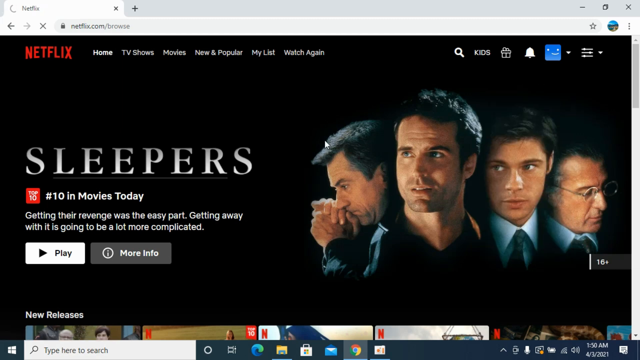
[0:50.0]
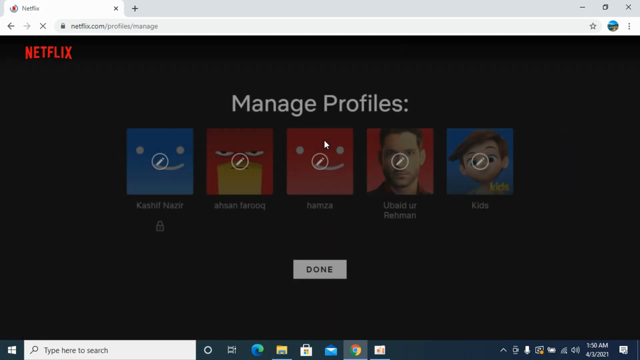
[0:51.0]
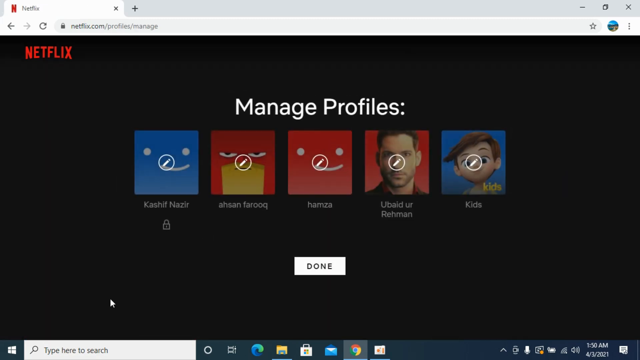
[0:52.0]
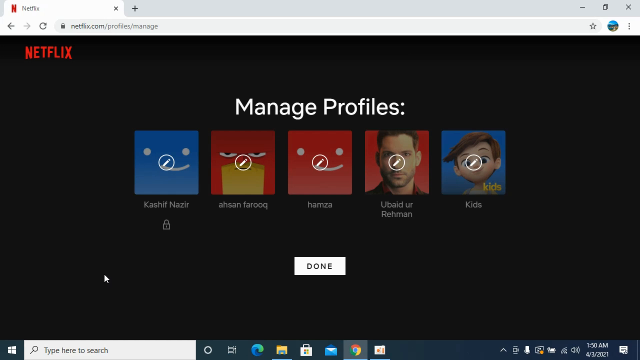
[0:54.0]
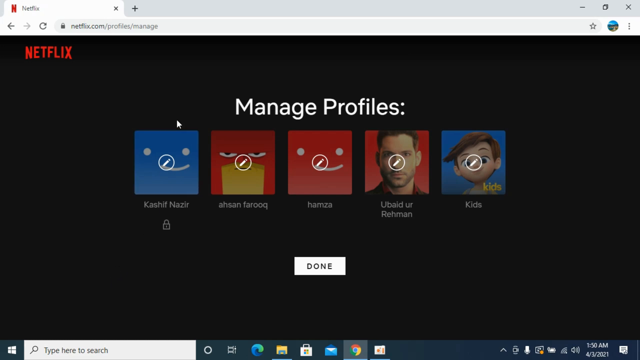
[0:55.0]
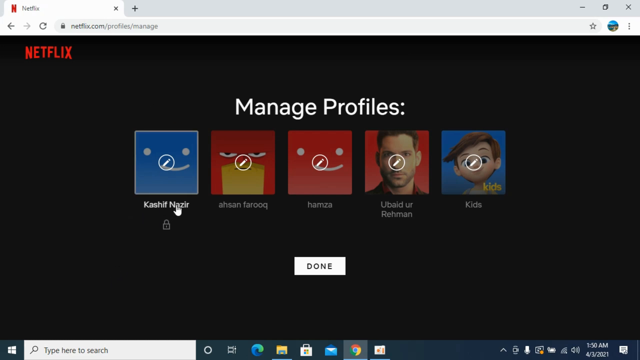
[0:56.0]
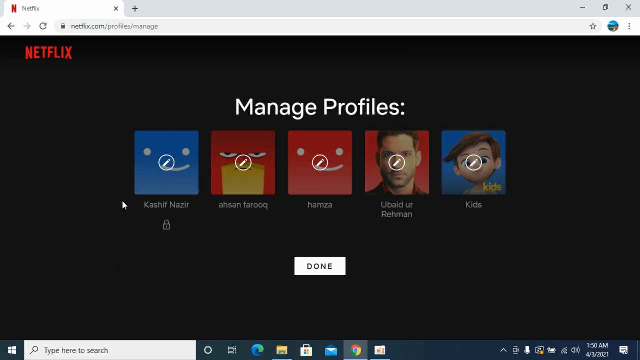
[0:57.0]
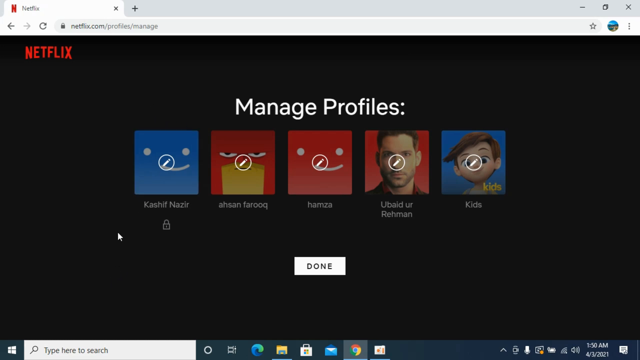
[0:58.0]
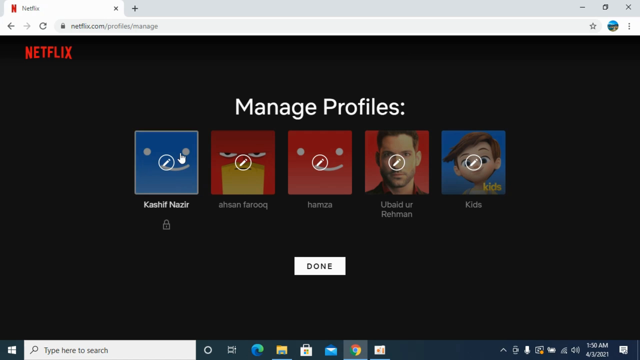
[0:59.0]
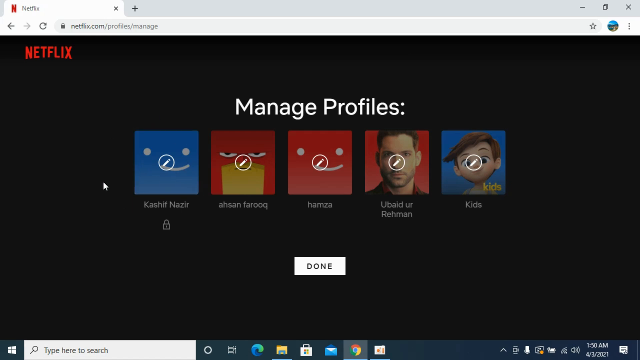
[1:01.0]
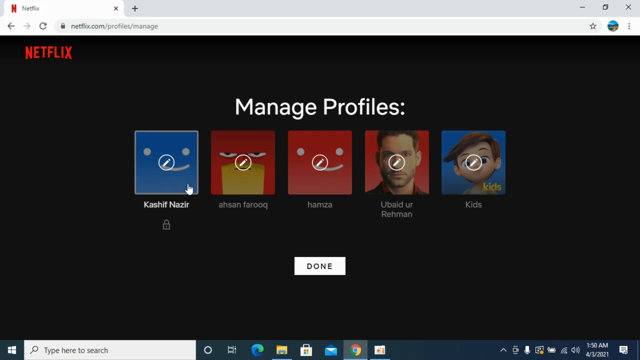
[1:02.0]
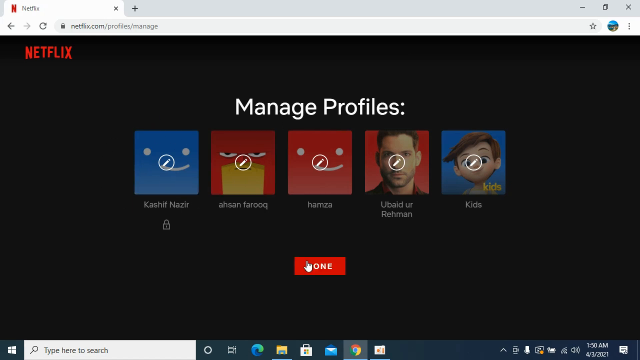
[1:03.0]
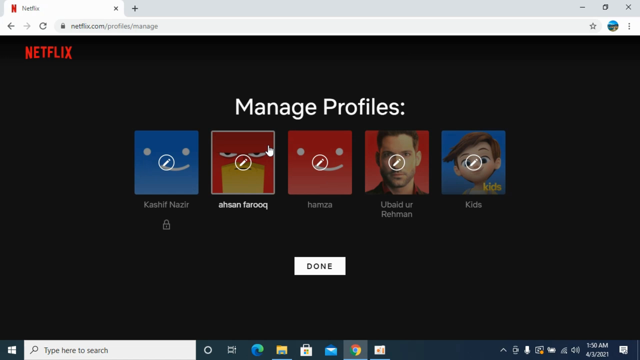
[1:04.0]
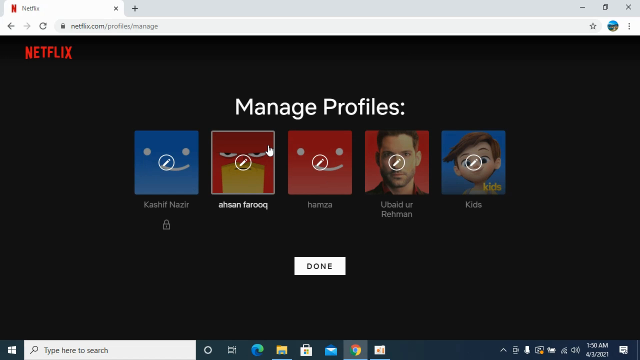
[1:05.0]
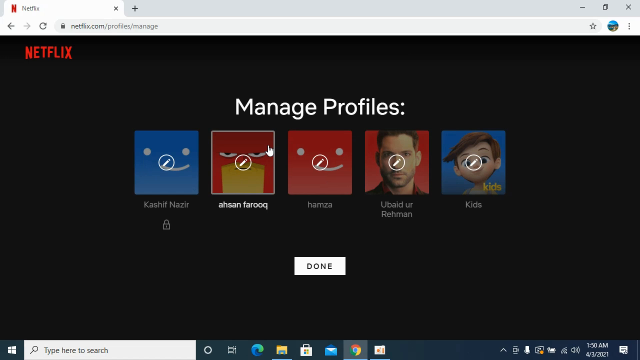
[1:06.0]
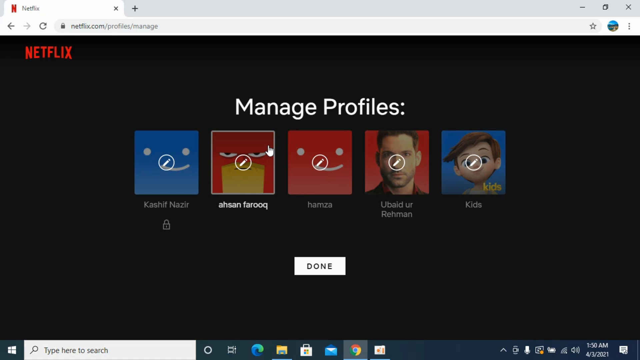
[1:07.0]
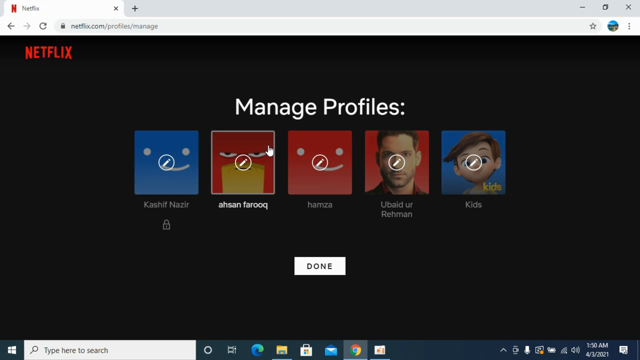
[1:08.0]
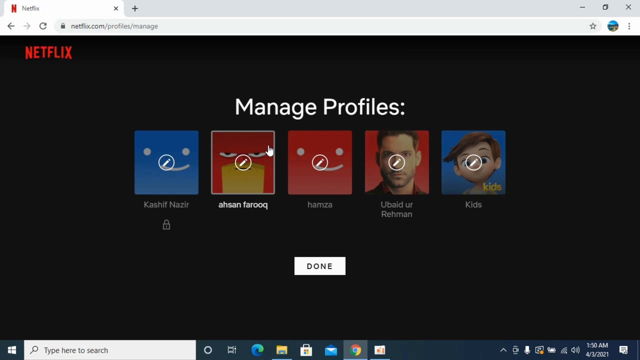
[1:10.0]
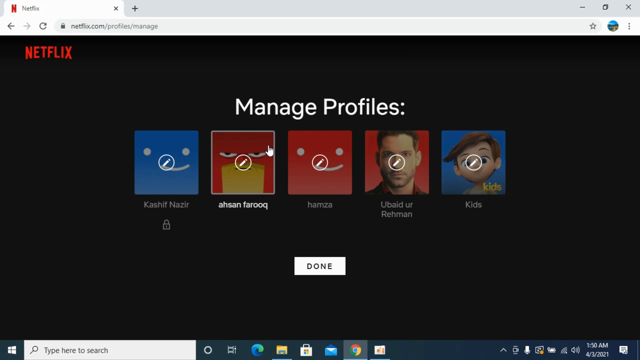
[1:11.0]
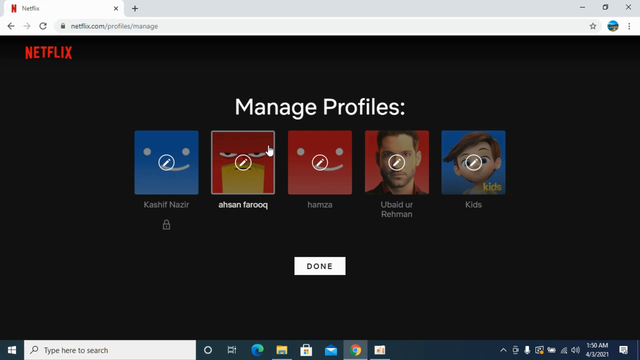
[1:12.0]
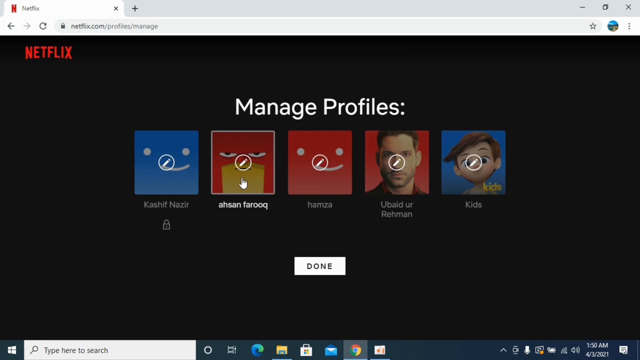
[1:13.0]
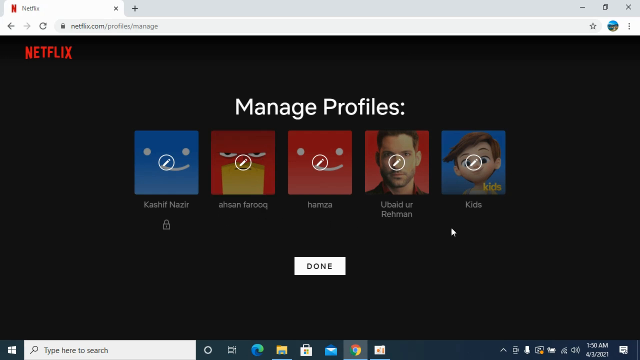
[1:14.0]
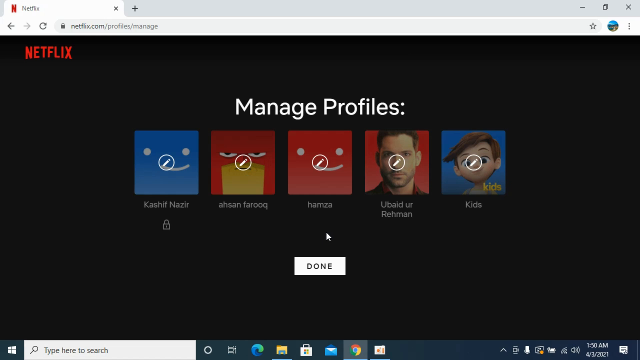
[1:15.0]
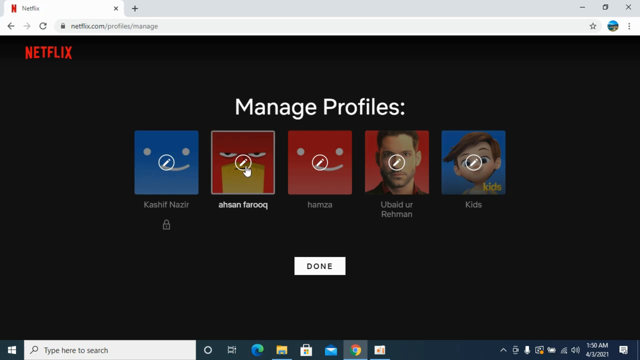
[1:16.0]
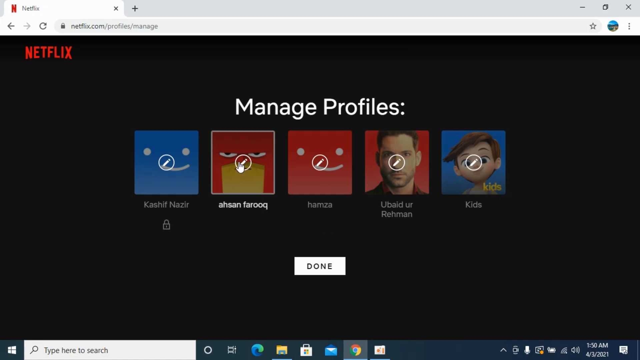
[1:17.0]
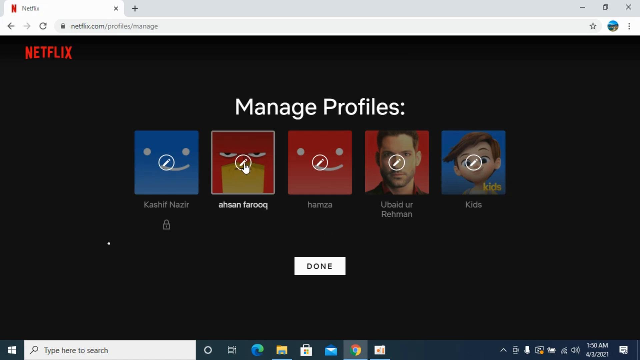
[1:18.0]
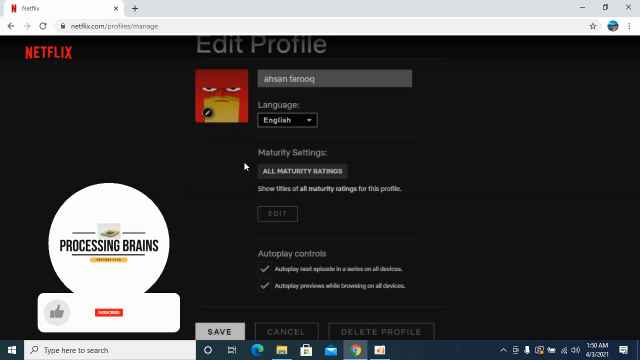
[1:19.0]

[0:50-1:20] A tab is open on the desktop with "netflix.com" in the URL. The page is zoomed in a little, showing only the images from the main Netflix page. "Netflix" appears in red across the top, with menu items including "at home, TV shows, movies, new and popular". A collage of images shows four men, all with a very concerned look on their faces. The page quickly changes to the manage profile page, where the author circles his mouse around the Kashif Nazir image on the far left, making large circles and now and then crossing over the image so it highlights and blinks. He then makes an even larger circle around all the images, comes back to Hassan's image in the center, and scrolls on that image a few times, moving in a very tight circle around its center. A subscribe button then pops up at the bottom.